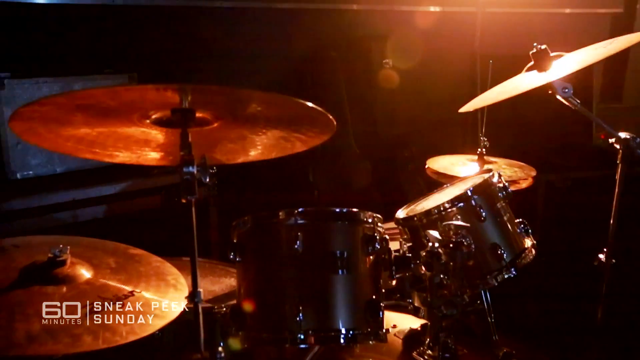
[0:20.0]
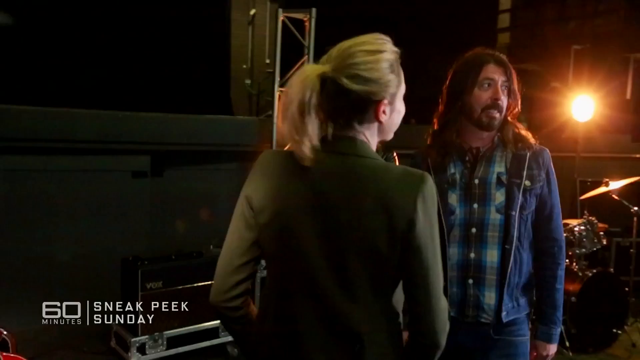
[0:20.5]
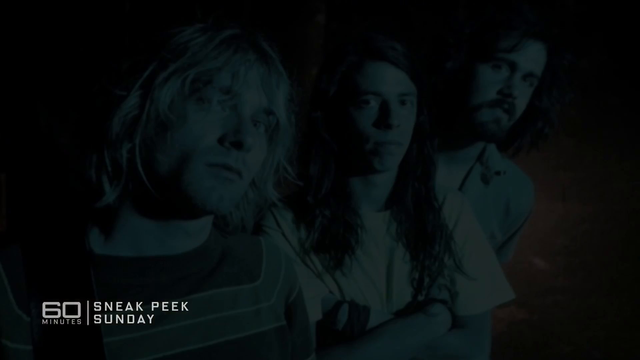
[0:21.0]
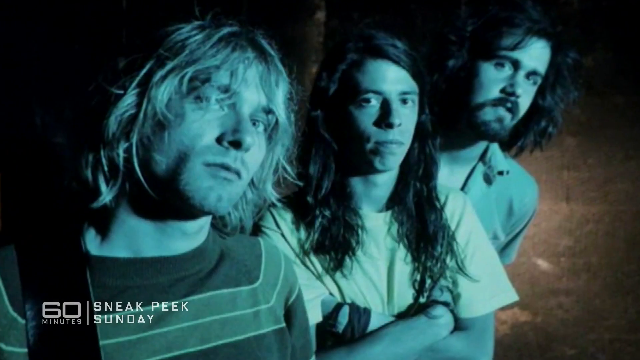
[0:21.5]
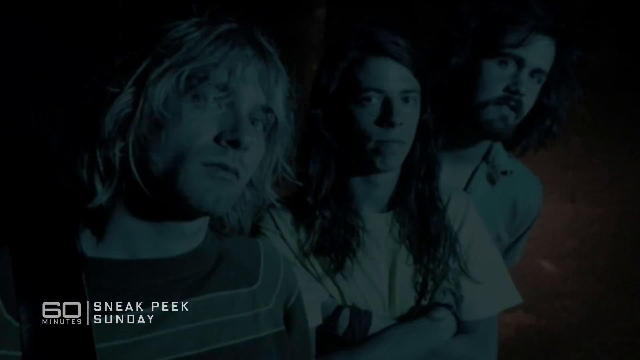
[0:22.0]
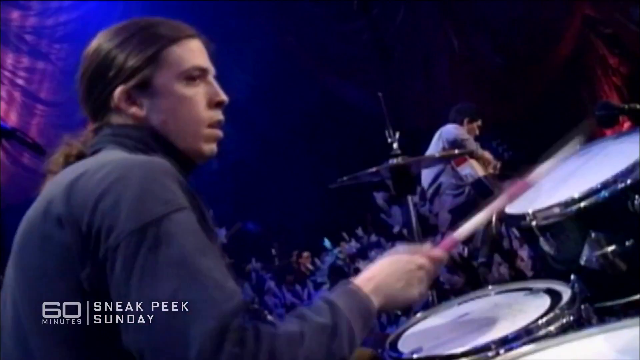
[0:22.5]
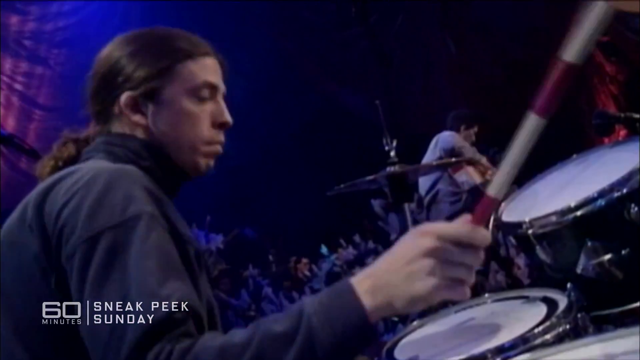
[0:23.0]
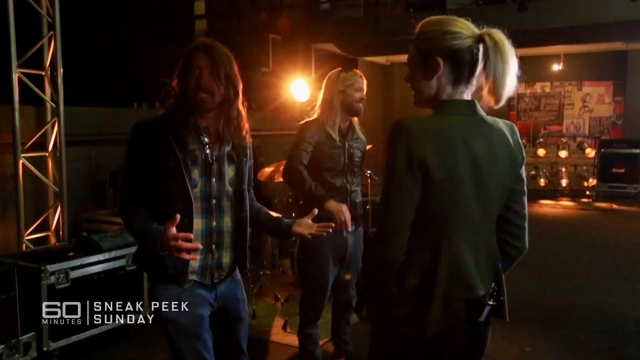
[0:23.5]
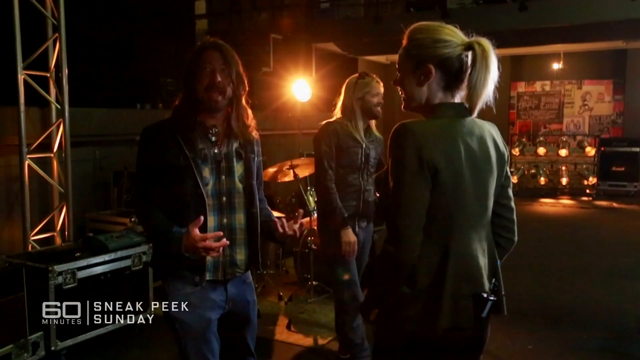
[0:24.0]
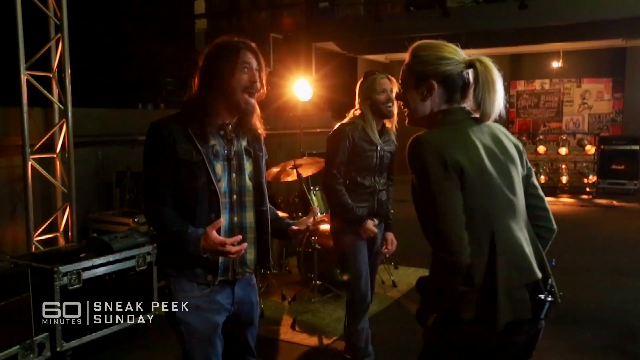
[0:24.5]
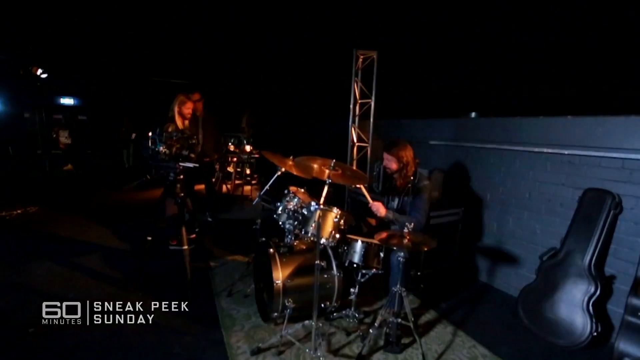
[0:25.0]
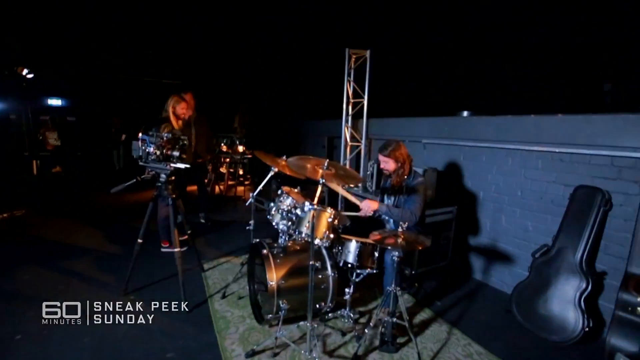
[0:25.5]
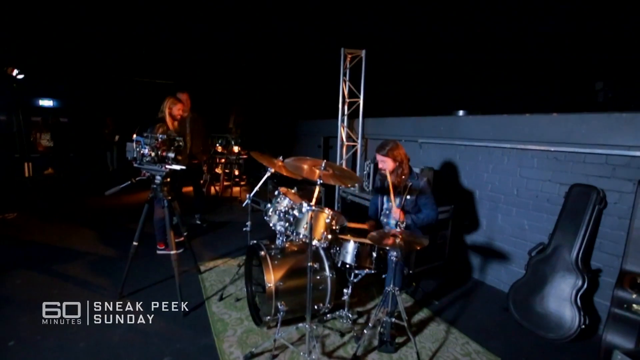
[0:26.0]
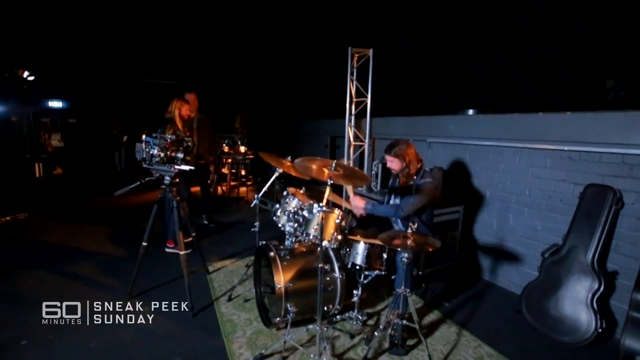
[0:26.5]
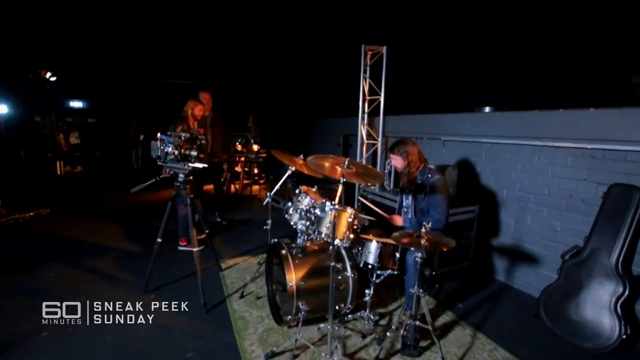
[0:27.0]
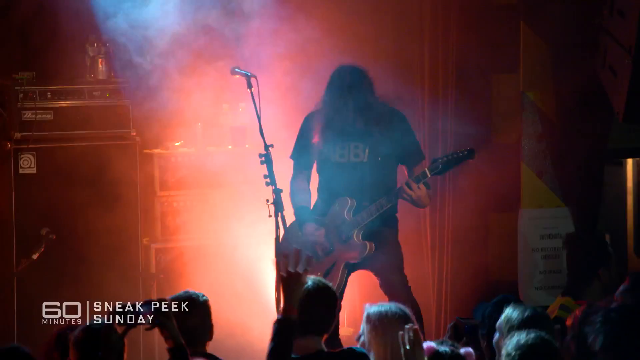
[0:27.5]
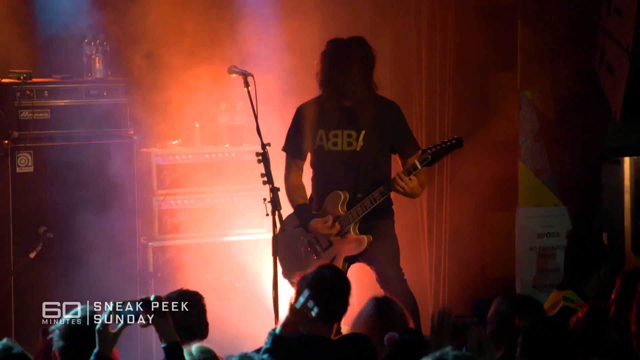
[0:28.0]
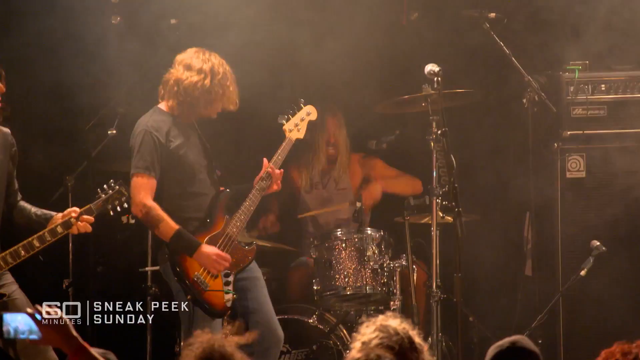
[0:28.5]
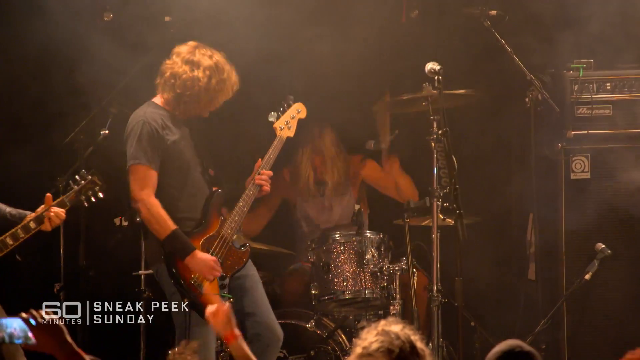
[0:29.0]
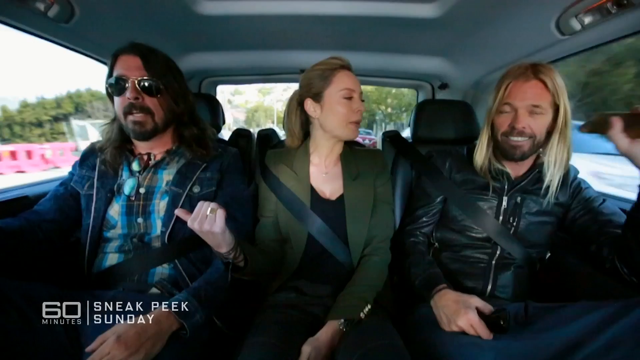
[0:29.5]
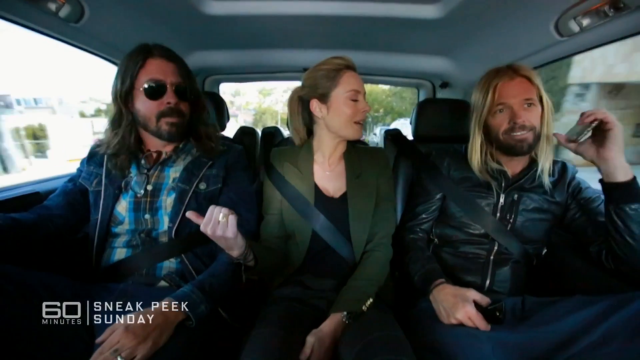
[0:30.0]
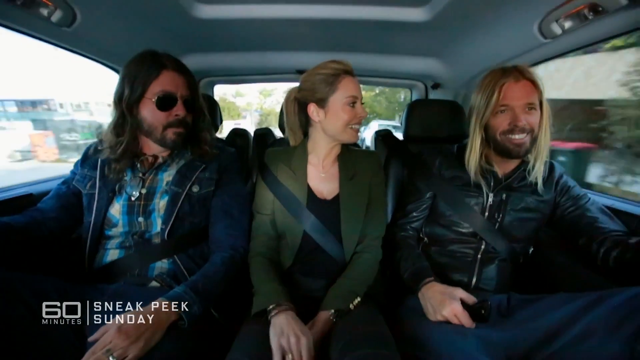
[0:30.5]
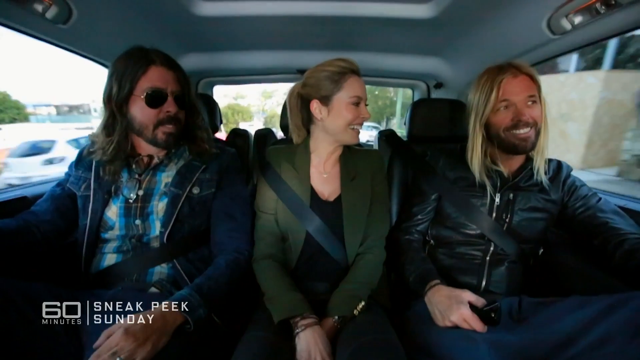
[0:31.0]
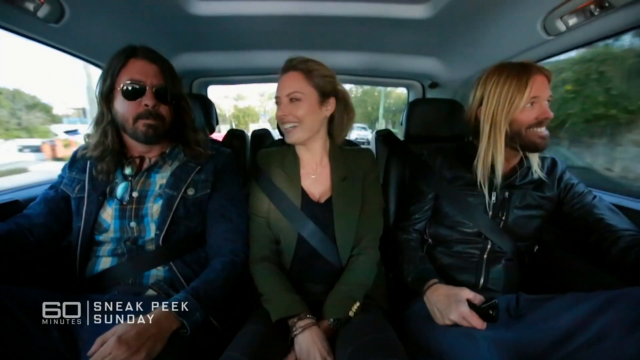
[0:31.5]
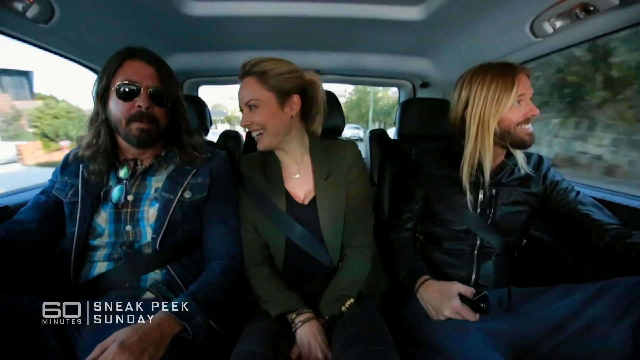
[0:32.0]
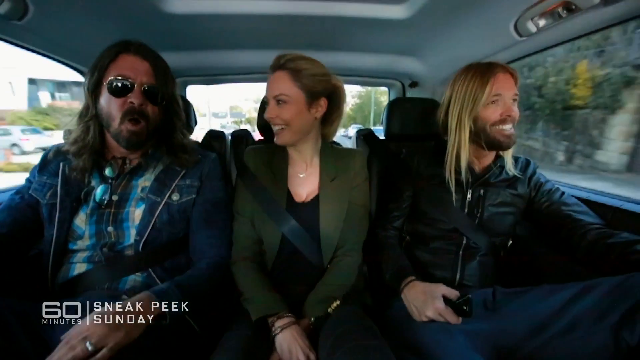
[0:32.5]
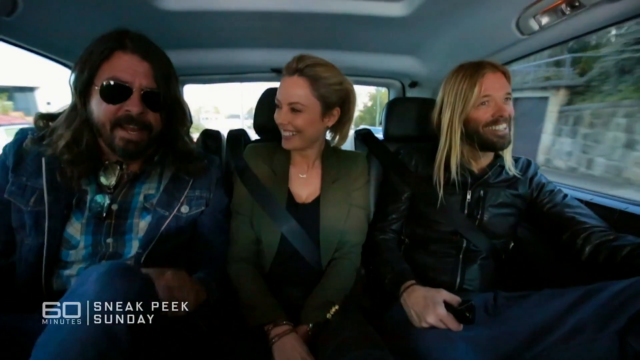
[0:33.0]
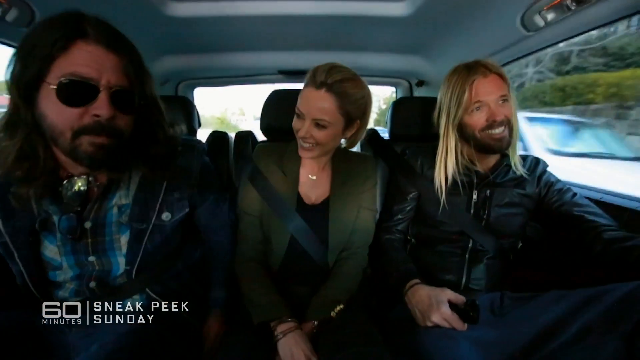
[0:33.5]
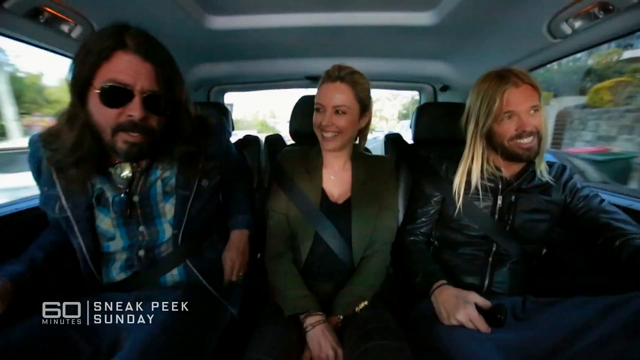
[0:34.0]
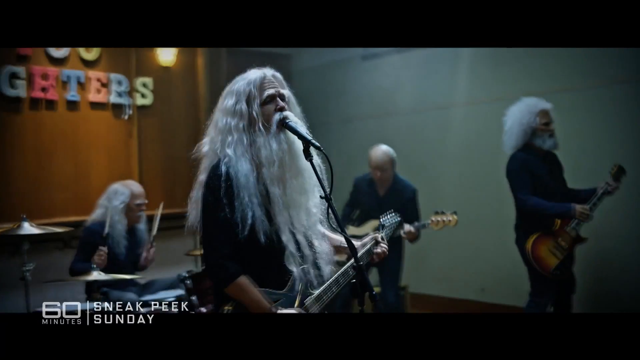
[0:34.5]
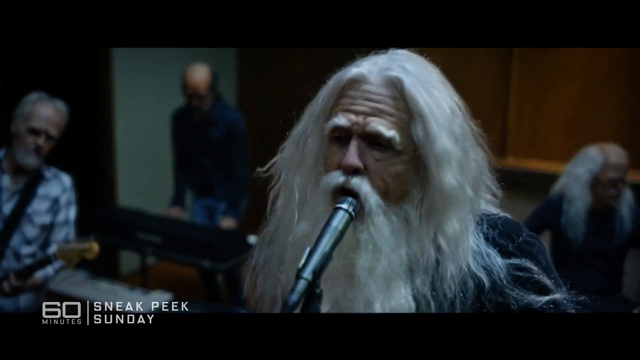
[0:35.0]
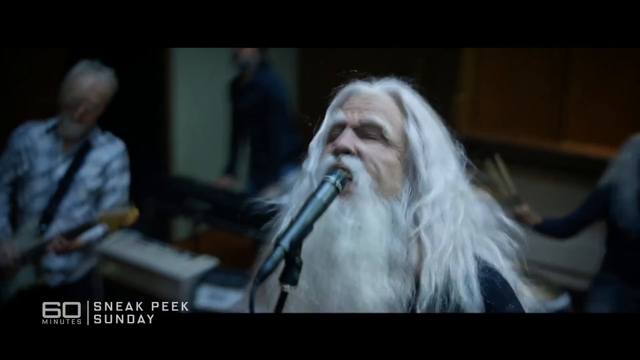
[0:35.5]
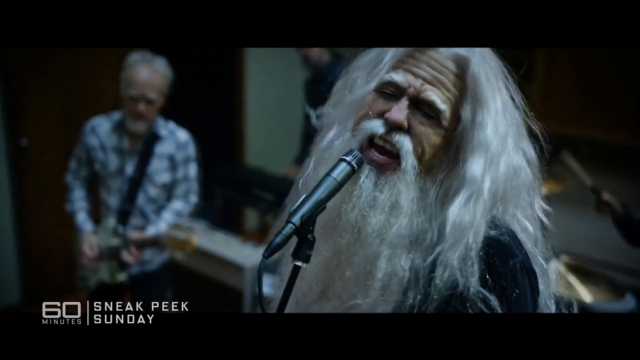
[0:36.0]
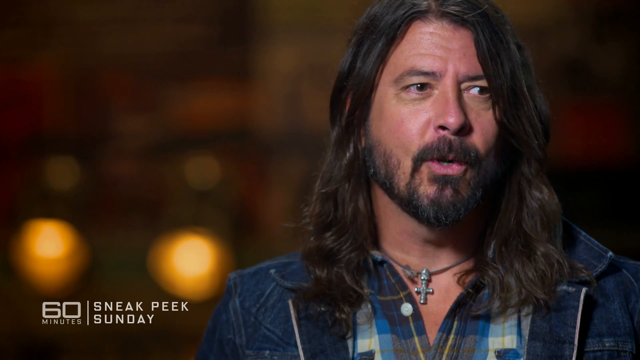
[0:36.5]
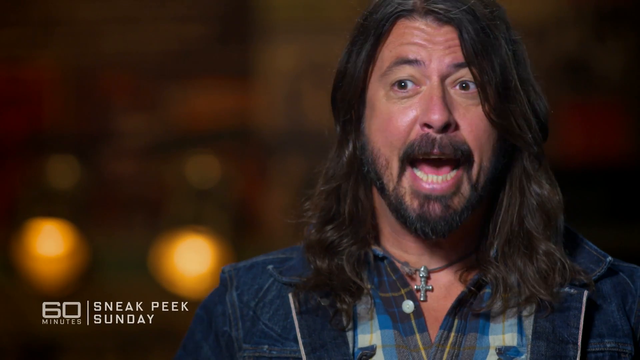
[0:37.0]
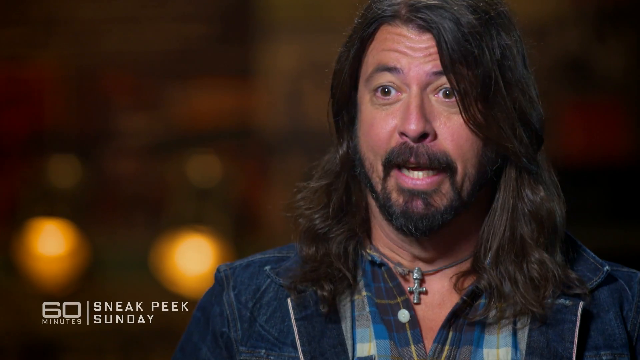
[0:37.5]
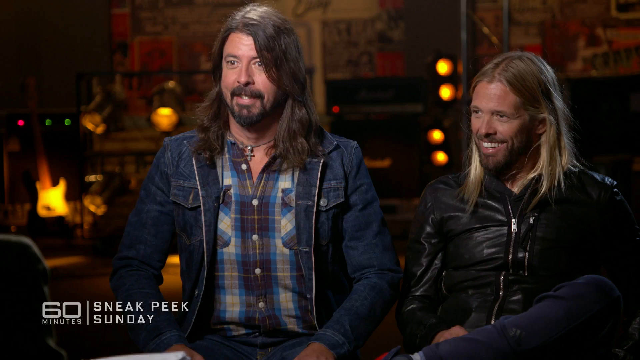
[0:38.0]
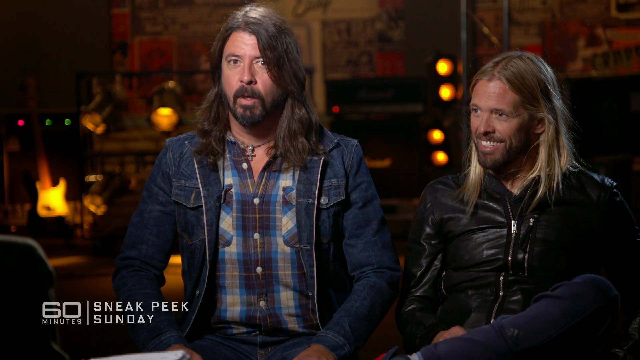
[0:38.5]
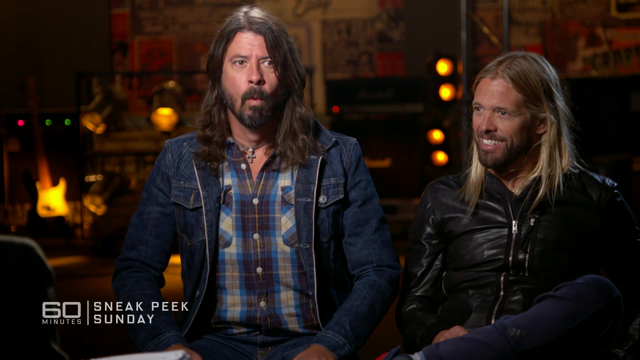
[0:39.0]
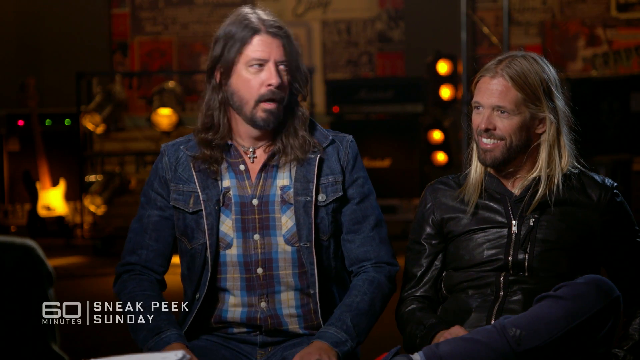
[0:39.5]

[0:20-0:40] On the Sneak Peek Sunday show, a lady in a brown long-sleeved top stands with the long-haired man in the jeans jacket who was holding the board. What looks like a very bright globe is just behind the man. They appear to be recording something. Drums are played, someone plays a guitar, and the audience looks very happy, clapping their hands. Later, the long-haired man in the denim jacket wears shades, and the group sits in a car with their seatbelts on. The other man wears a leather jacket. The lady is seated in the center, between the two men. They are all smiling, chatting and laughing, and other cars are visible in the background as they drive.